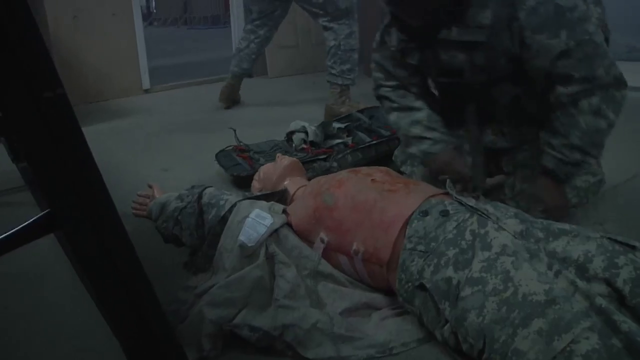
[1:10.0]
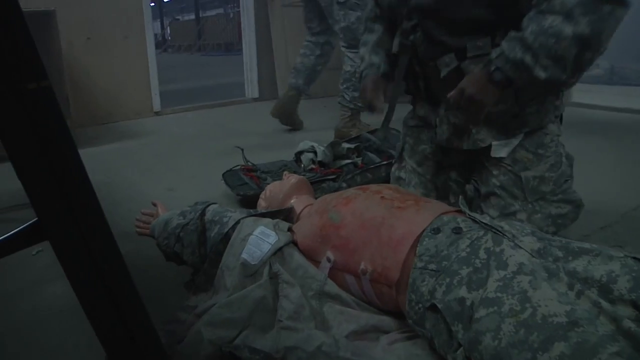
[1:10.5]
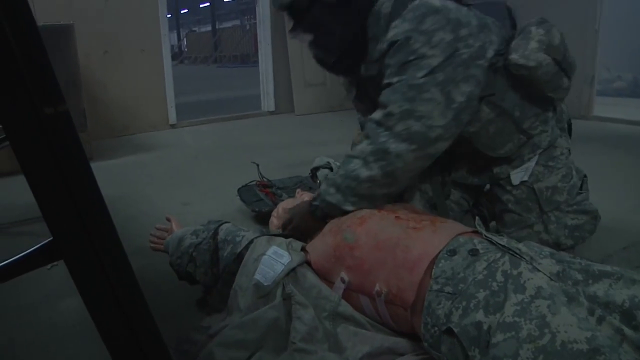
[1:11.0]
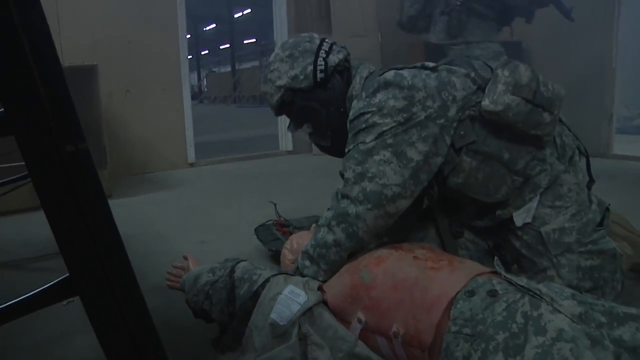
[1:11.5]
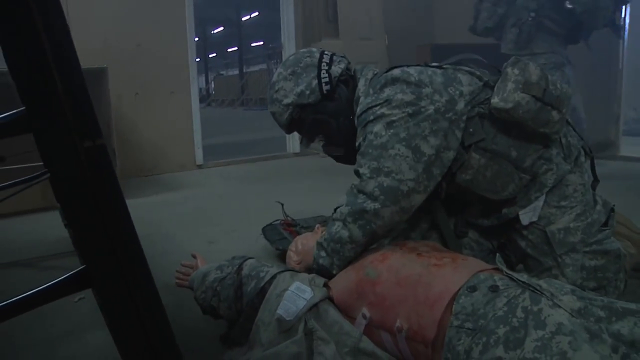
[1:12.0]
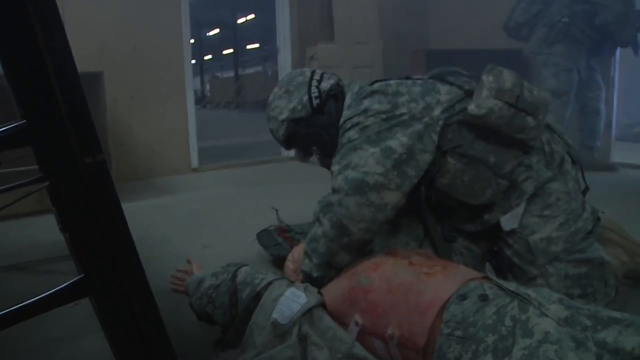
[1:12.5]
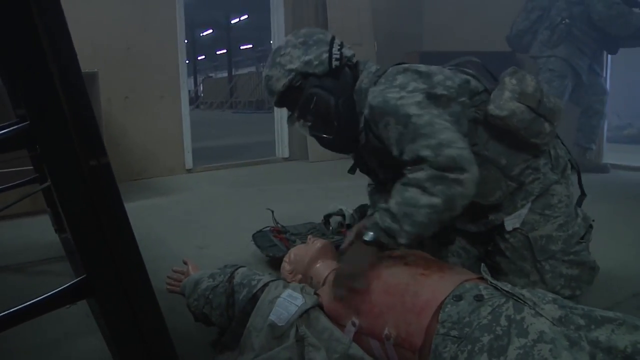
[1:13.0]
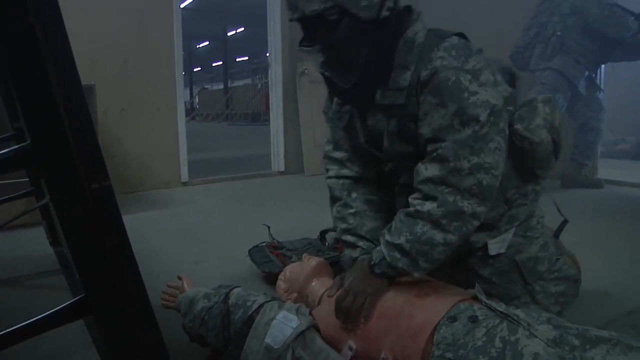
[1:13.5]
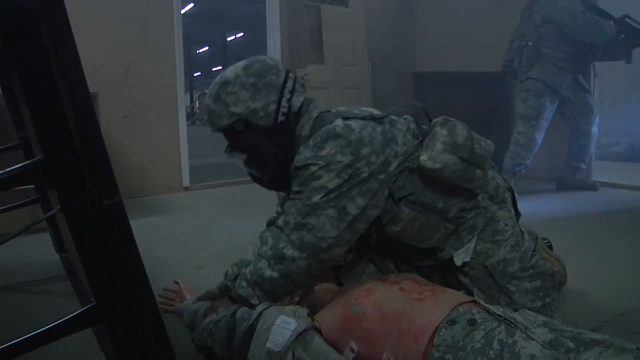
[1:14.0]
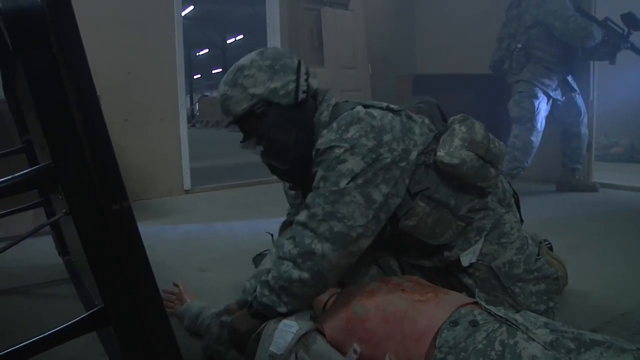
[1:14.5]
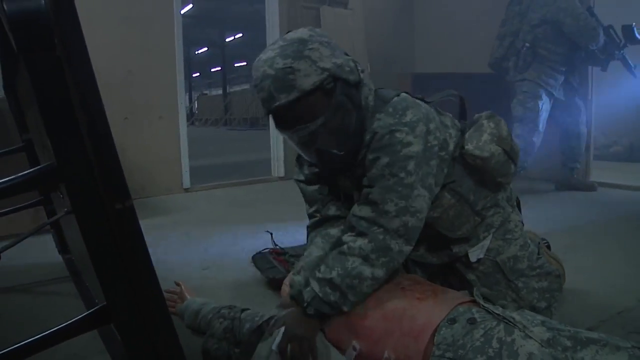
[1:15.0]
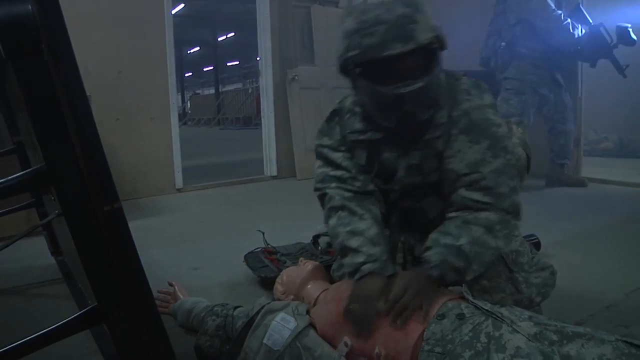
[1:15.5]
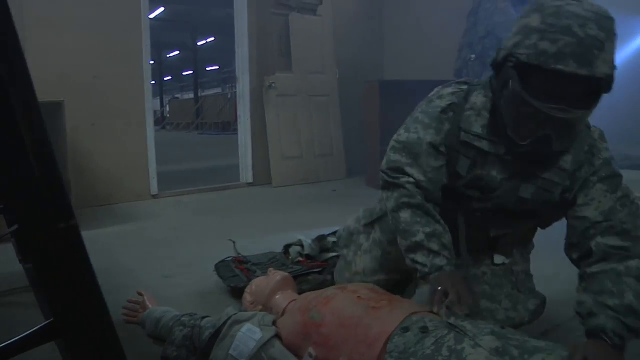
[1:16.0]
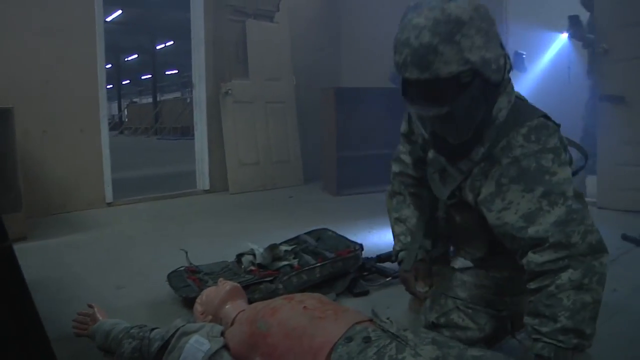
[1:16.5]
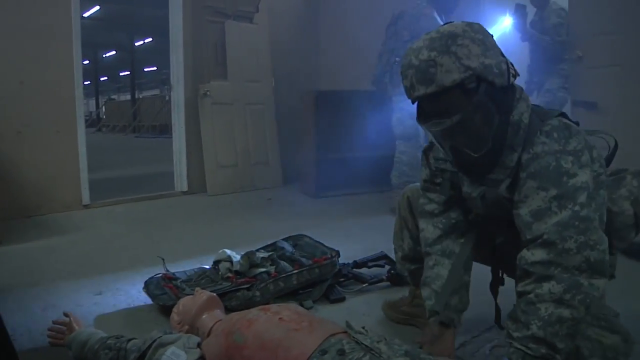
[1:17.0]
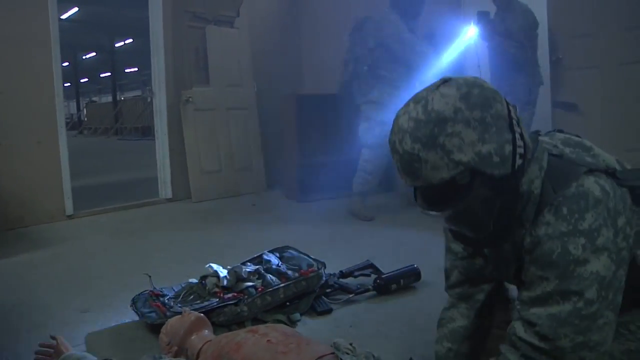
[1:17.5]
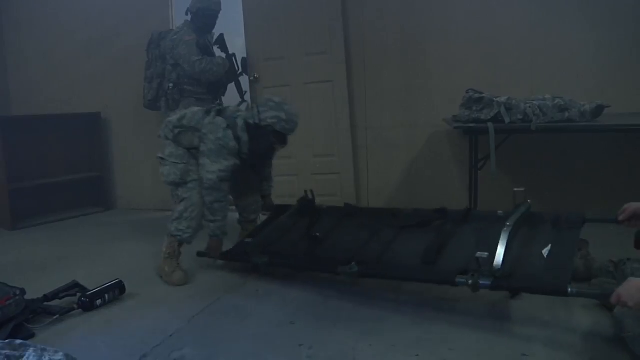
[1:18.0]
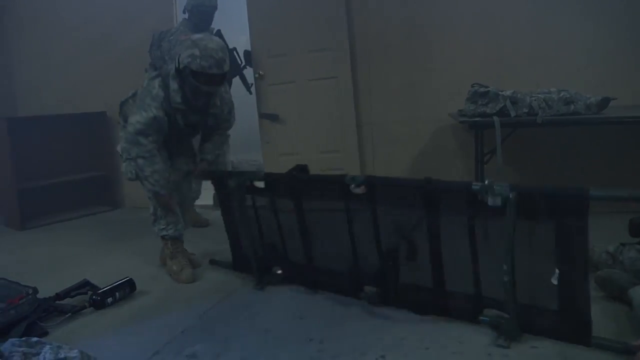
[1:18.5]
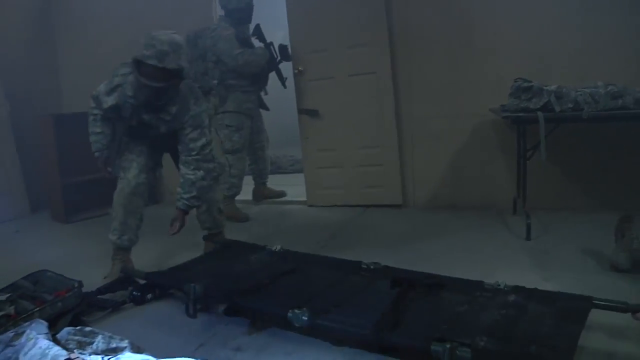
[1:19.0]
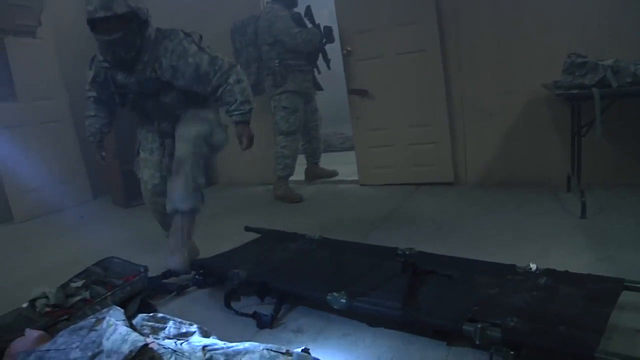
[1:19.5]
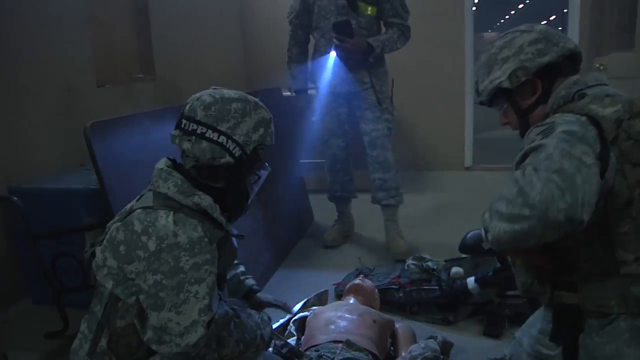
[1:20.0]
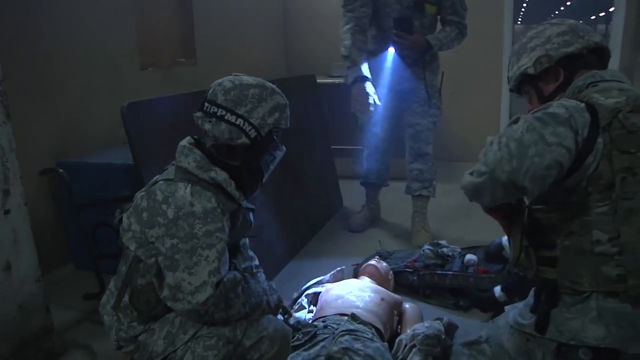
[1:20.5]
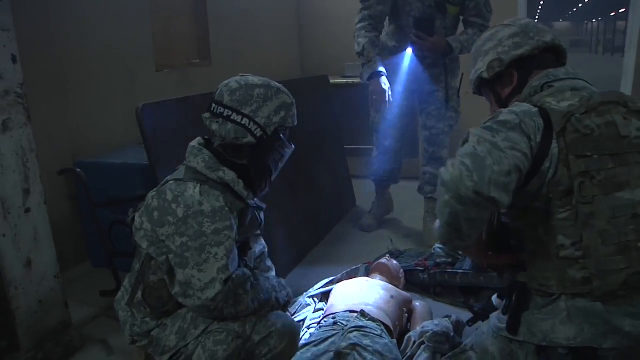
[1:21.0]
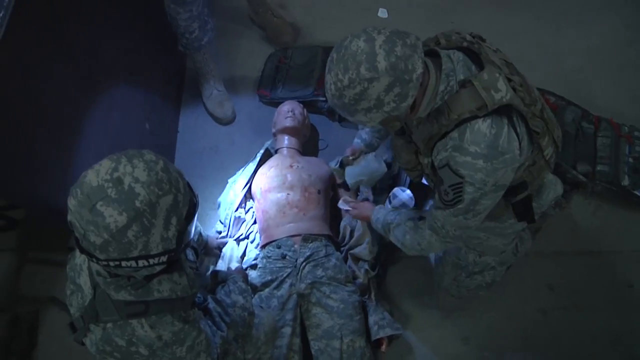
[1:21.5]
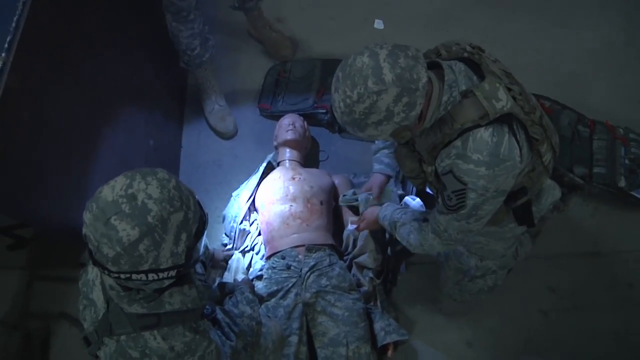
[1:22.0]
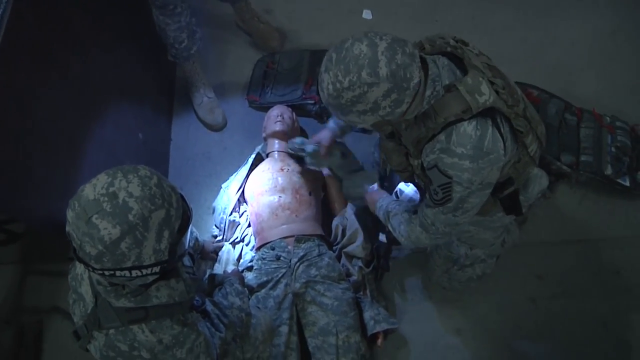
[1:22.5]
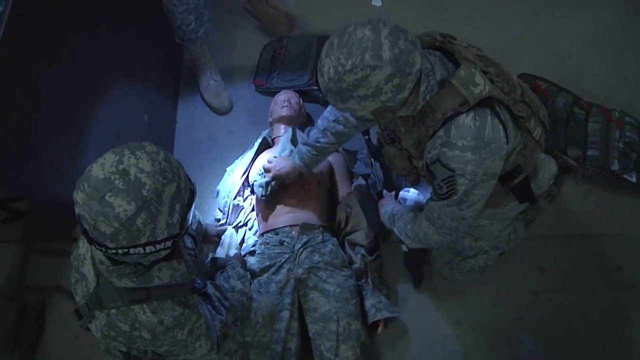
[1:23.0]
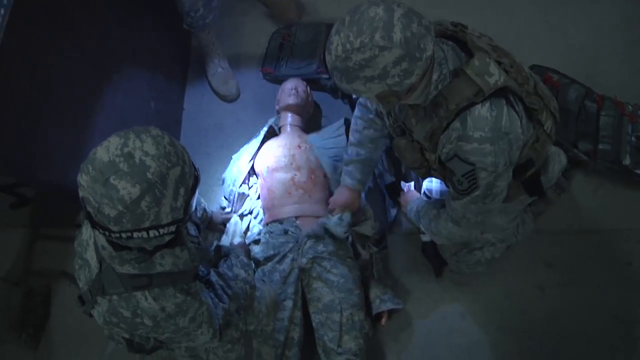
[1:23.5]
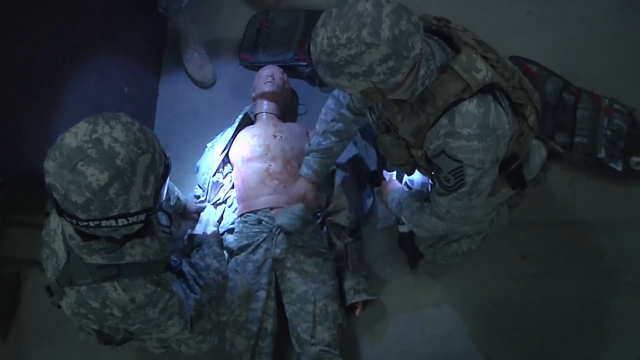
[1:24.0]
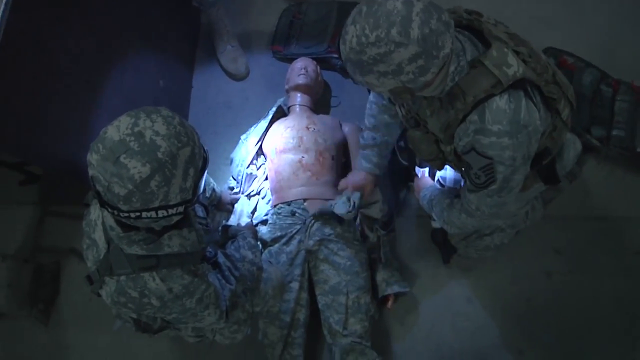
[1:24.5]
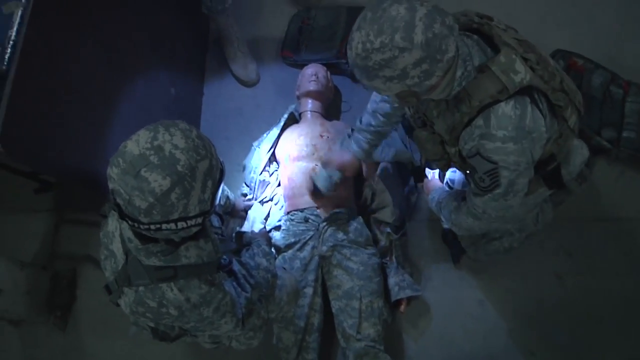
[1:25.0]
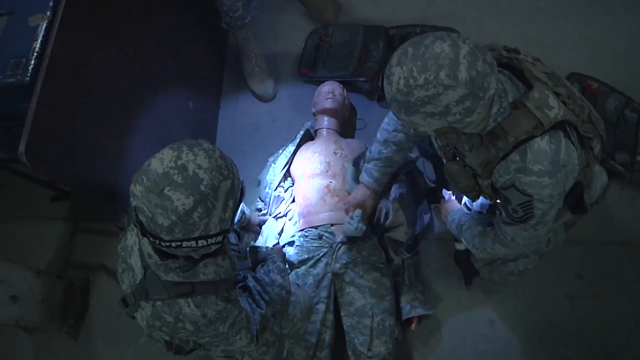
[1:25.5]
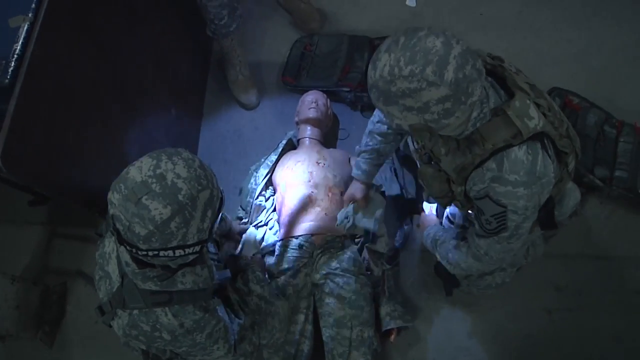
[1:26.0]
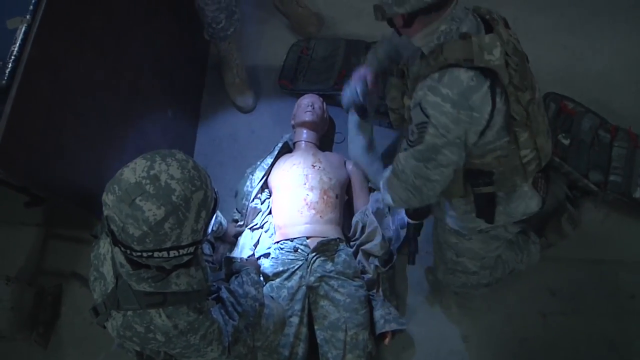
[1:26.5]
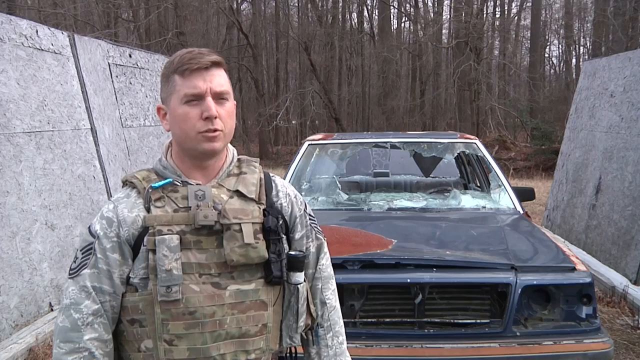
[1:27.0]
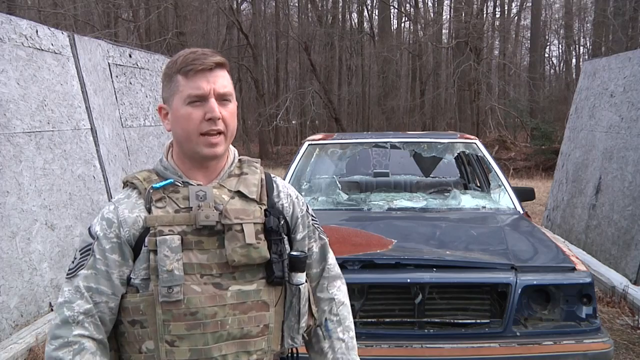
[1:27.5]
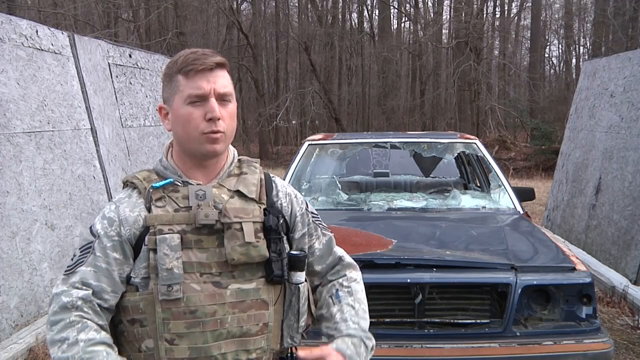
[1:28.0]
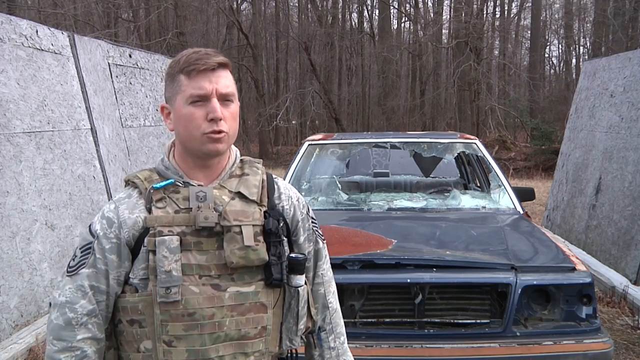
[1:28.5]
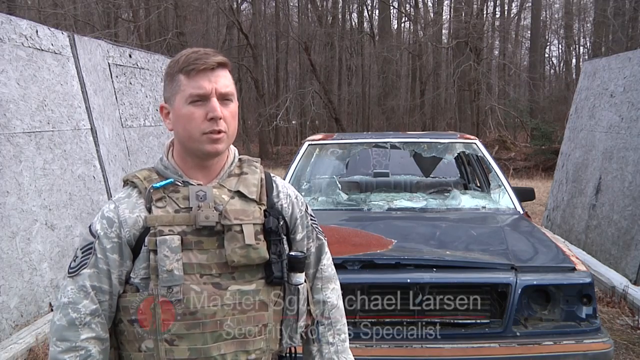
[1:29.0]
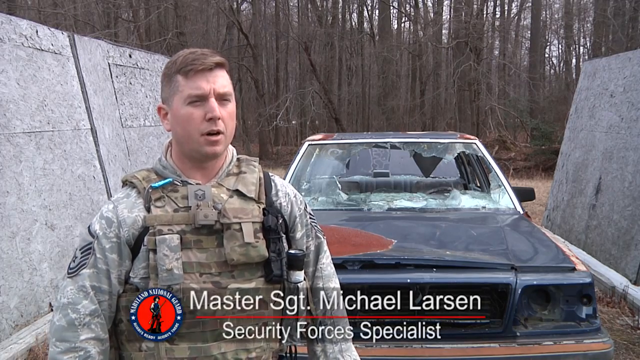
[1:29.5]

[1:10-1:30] The soldiers in a room are busy with the wounded demo soldier. They have taken his top off halfway, leaving his chest bare, and there is blood all over. A soldier touches him all around his body, feeling for a pulse on his neck and checking his legs, chest and arms, and one of the soldiers wipes the blood off his chest. In the background, two soldiers are looking around, and one is holding a torch. One of the soldiers brings a stretcher closer to the wounded soldier. A white middle-aged man in a soldier's uniform, Master Sergeant Michael Larsen, a security forces specialist, is being interviewed and answers some questions. He is standing behind a car that has broken windows and seems to be abandoned.